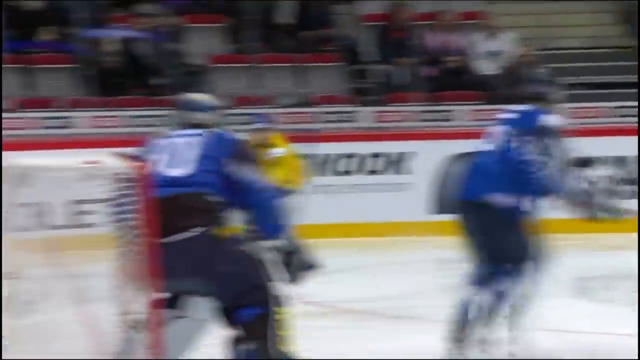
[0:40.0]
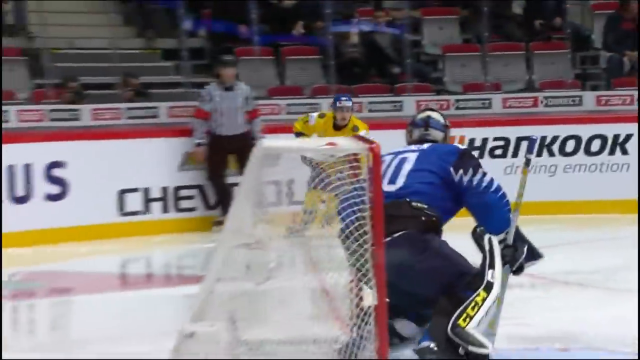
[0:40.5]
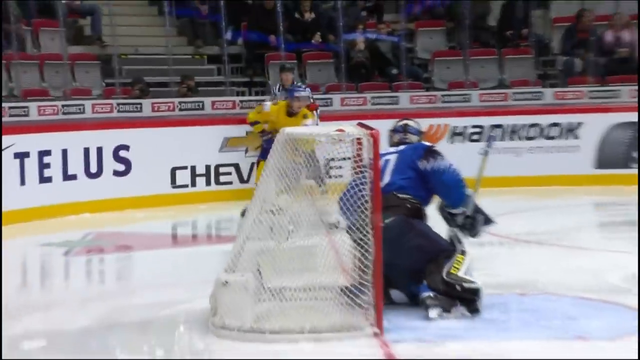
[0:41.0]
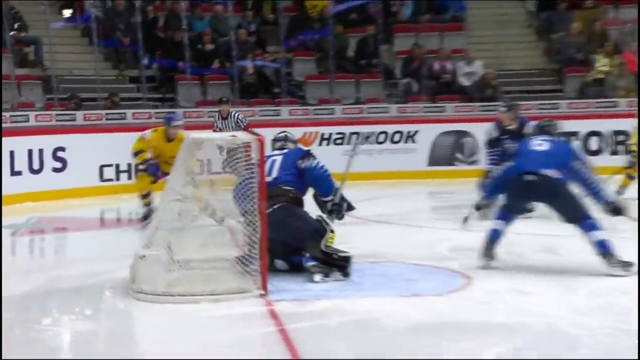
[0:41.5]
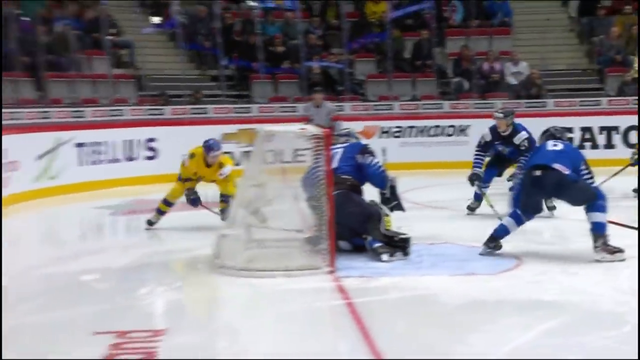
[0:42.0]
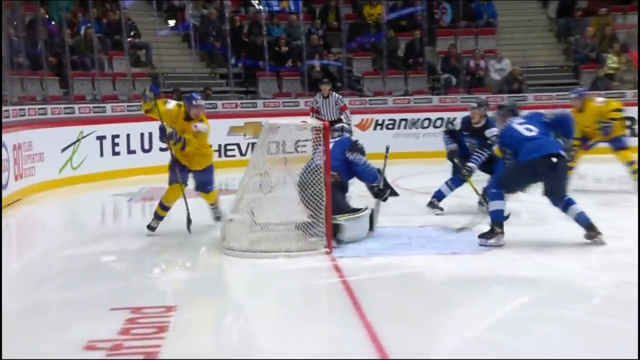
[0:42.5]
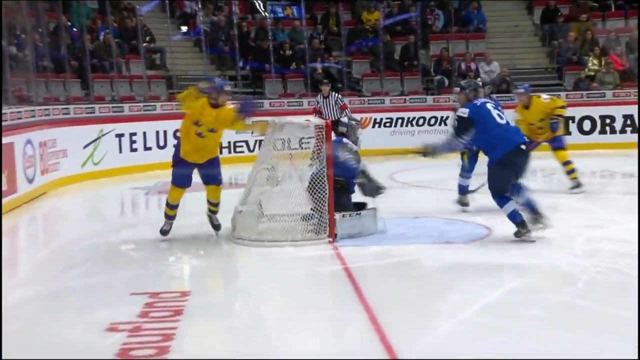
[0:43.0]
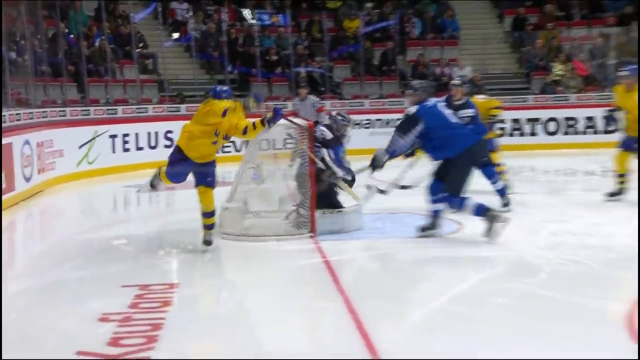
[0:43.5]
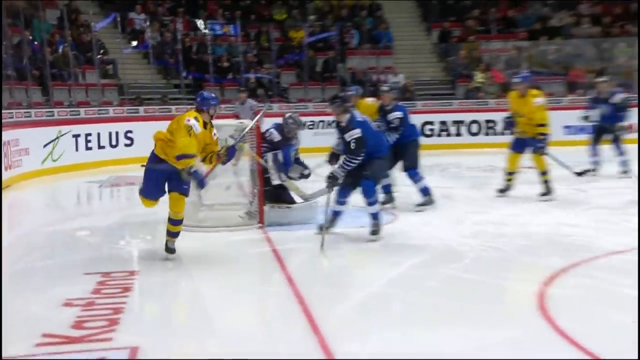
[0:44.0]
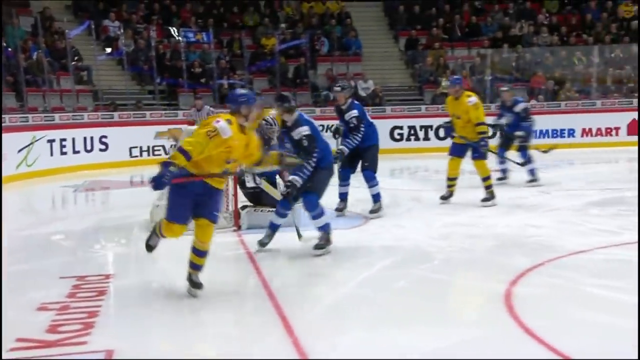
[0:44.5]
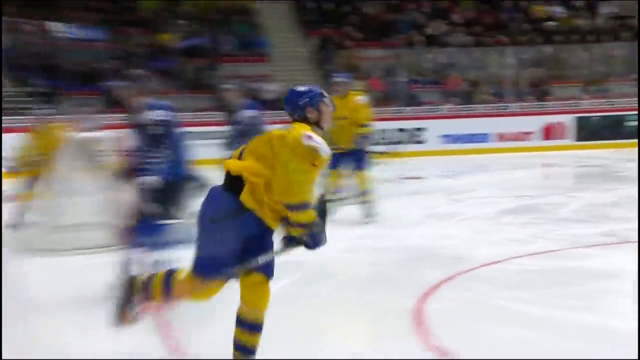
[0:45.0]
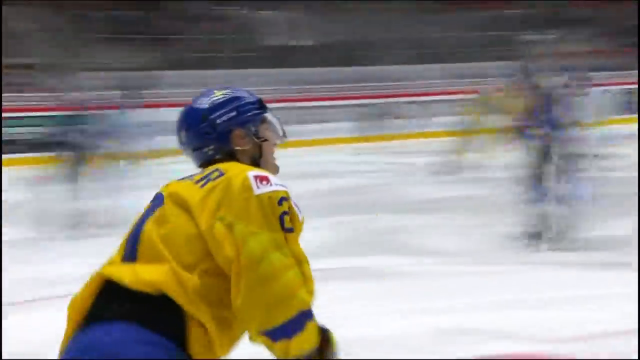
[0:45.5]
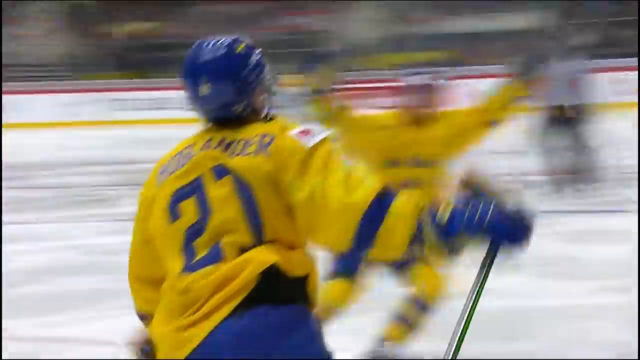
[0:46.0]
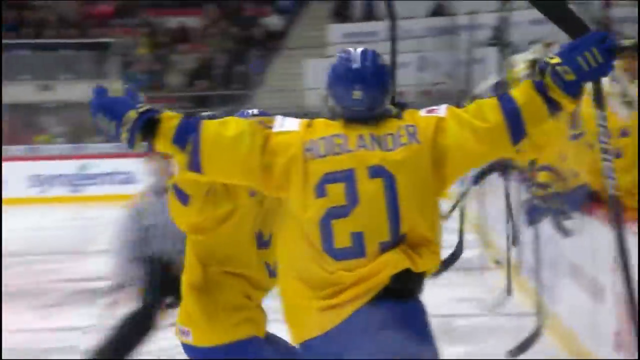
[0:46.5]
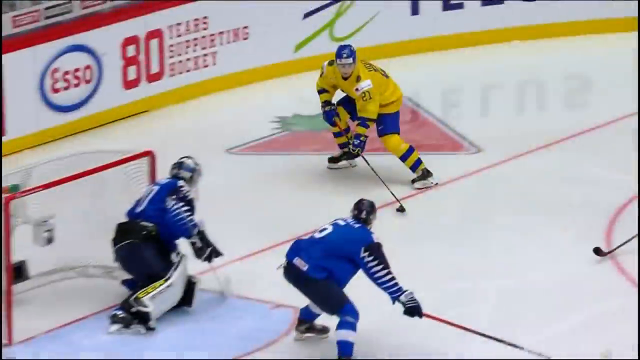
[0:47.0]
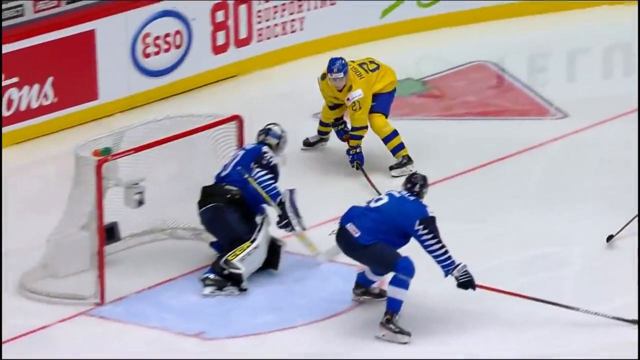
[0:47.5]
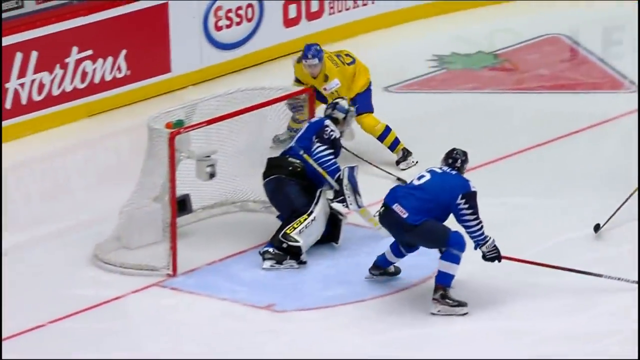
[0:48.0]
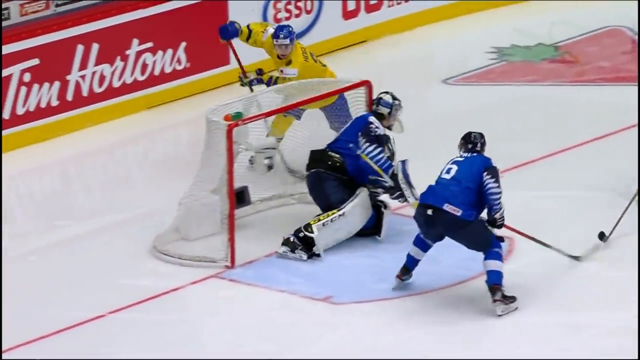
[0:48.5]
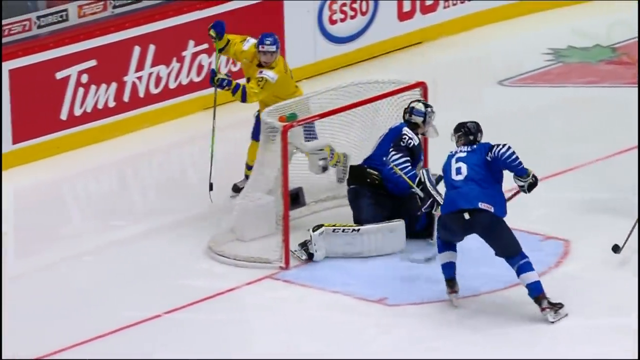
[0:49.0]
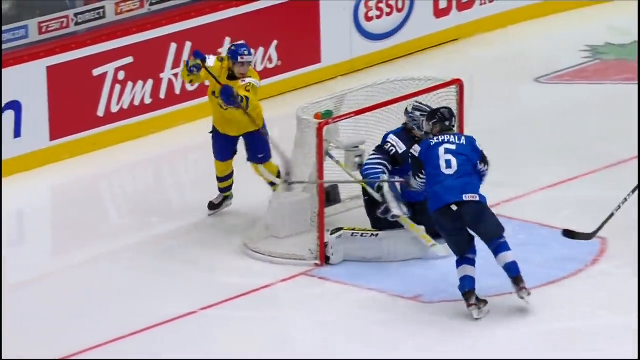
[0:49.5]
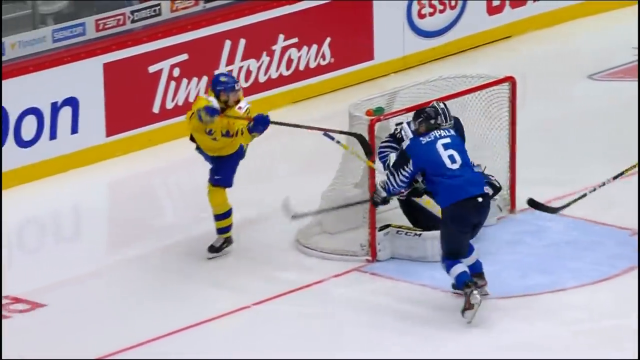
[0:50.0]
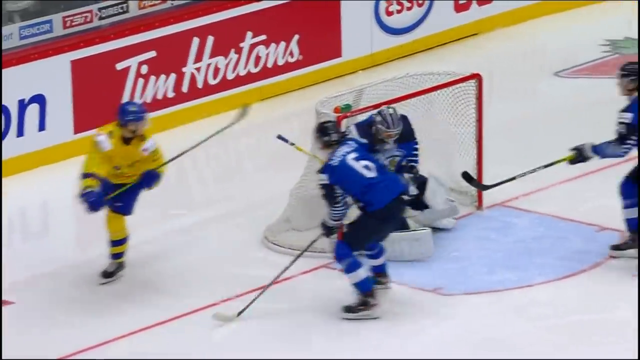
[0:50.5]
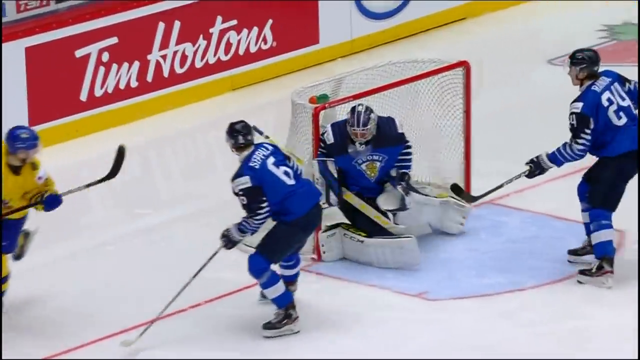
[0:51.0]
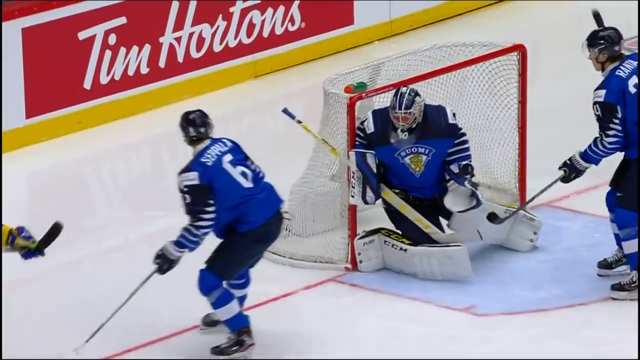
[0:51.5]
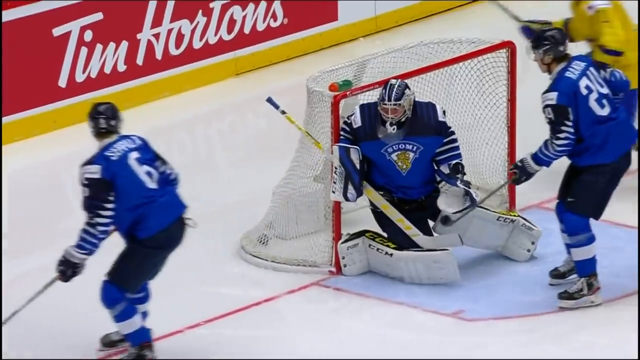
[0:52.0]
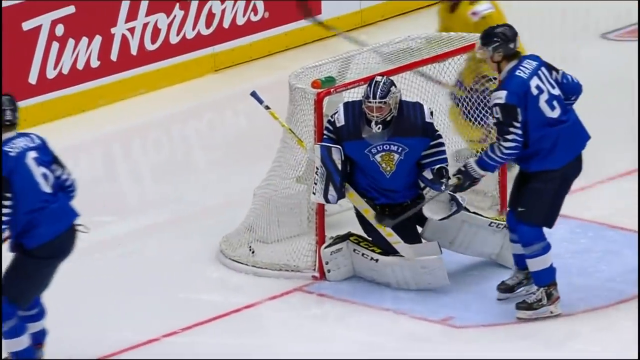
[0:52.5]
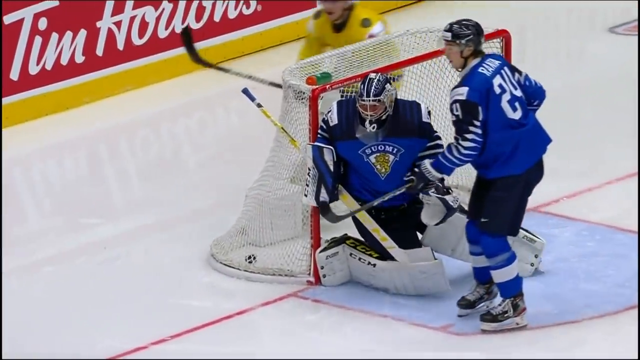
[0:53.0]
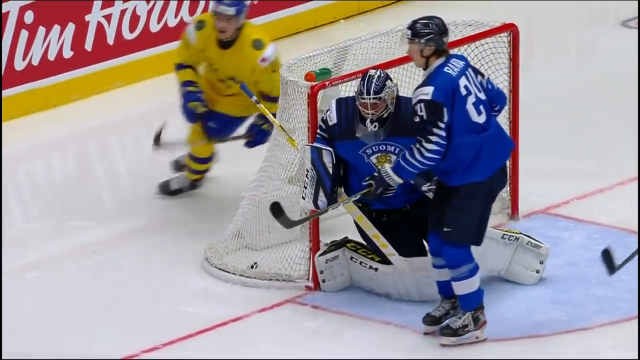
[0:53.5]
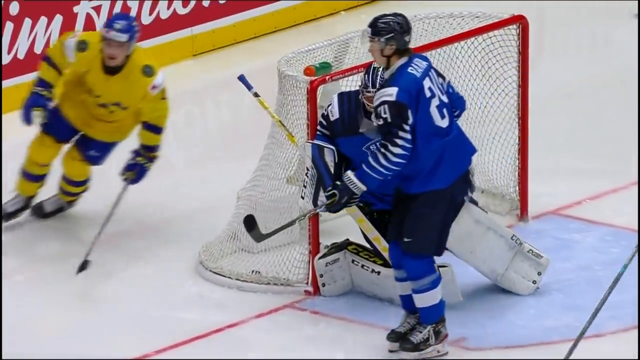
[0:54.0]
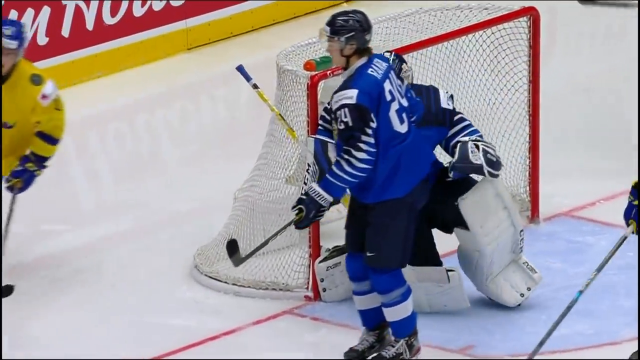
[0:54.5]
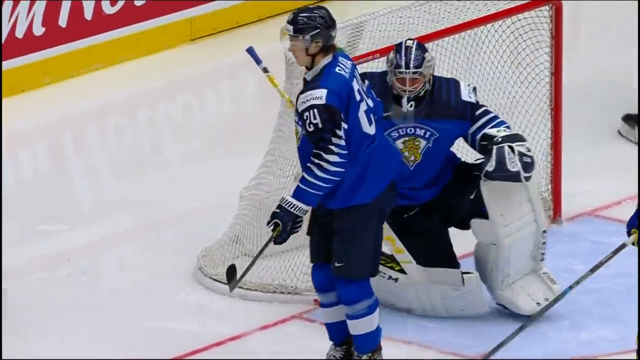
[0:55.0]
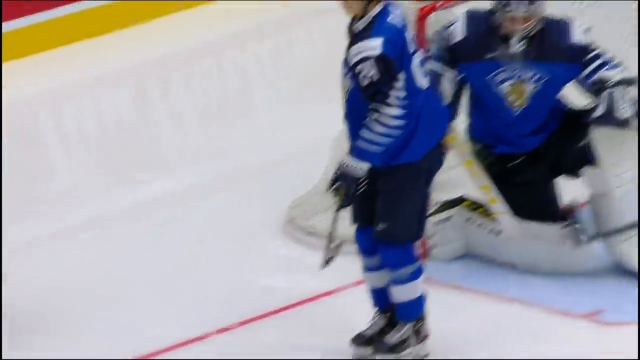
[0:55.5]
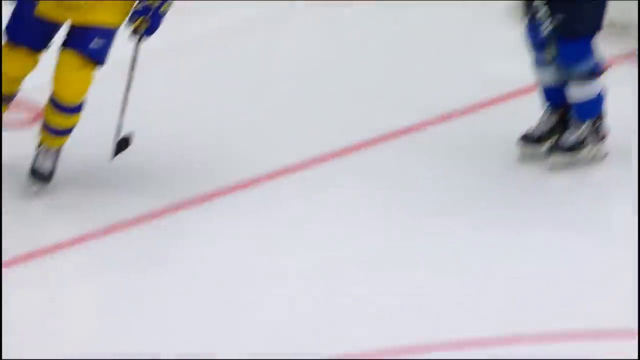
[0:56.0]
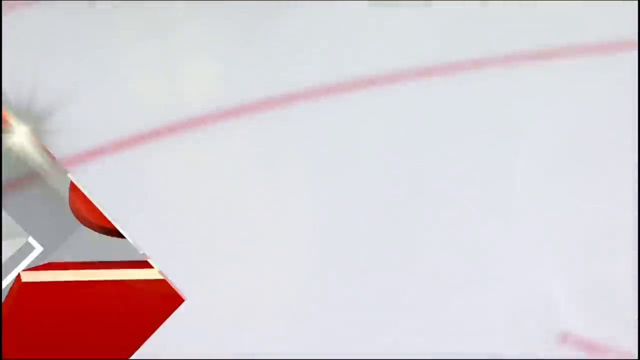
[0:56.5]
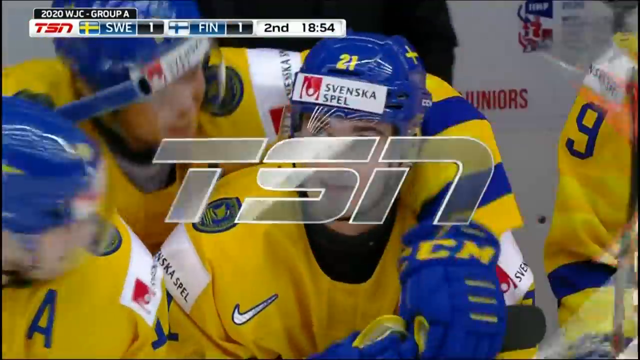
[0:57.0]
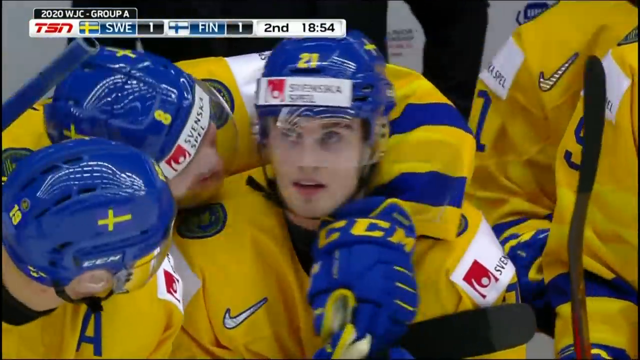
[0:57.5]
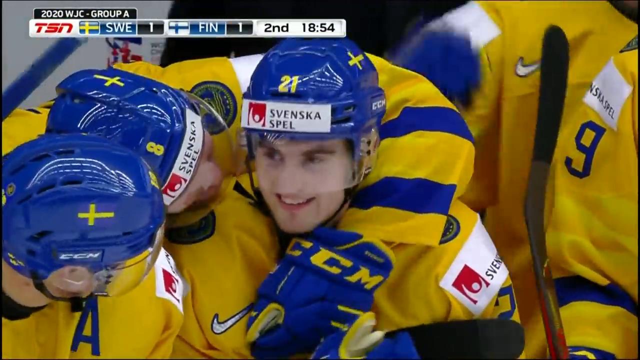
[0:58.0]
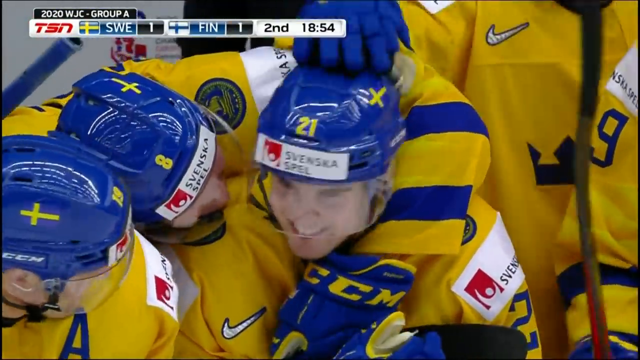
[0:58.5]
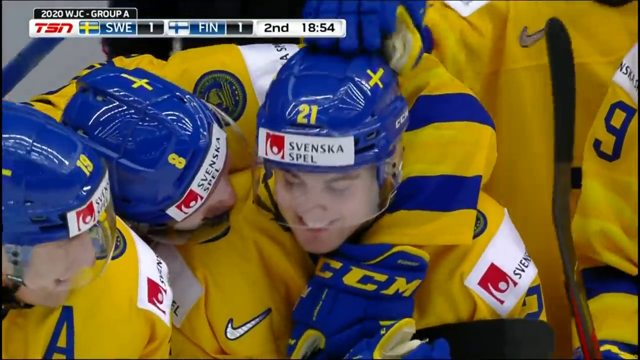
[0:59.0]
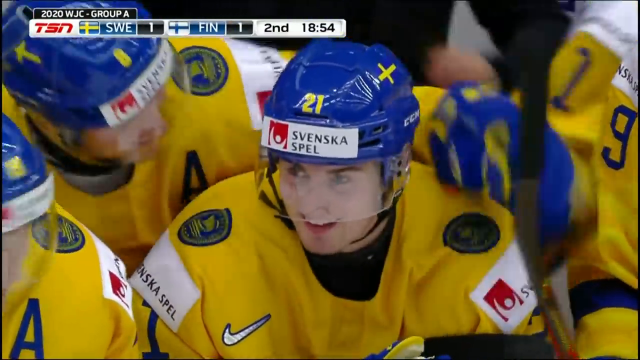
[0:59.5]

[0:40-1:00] A second replay shows the goal from a different camera angle, apparently from the right corner looking down the goal line toward the net. Swedish player number 21 brings the puck from the corner along the goal line, cradles it as he skates around the net and drops it over the right shoulder of the Finnish goaltender. Along the boards in the background are several advertisements for companies such as TELUS, Chevrolet, Gatorade and Timbermart. The camera follows number 21 as he raises his arms in celebration and skates to the bench. A fourth replay then shows the goal from the front of the net, revealing the goaltender's two-toned blue Finland jersey with "Suomi" on the front; he seems surprised that the puck has gone over his right shoulder. The video cuts to number 21 seated on the Swedish team's bench, being hugged from behind by the assistant captain and congratulated.